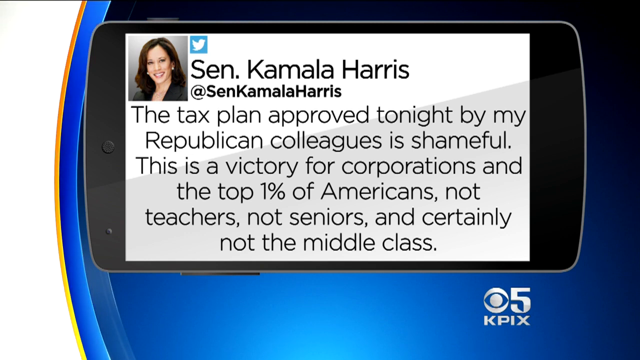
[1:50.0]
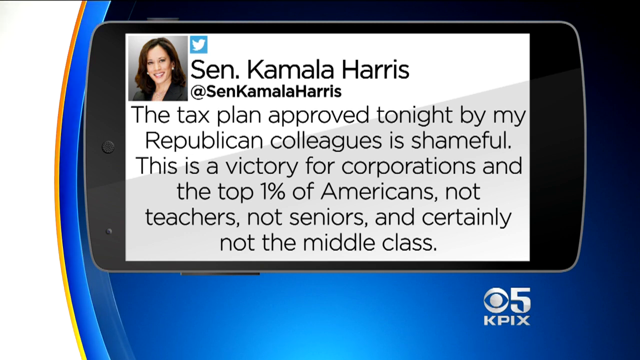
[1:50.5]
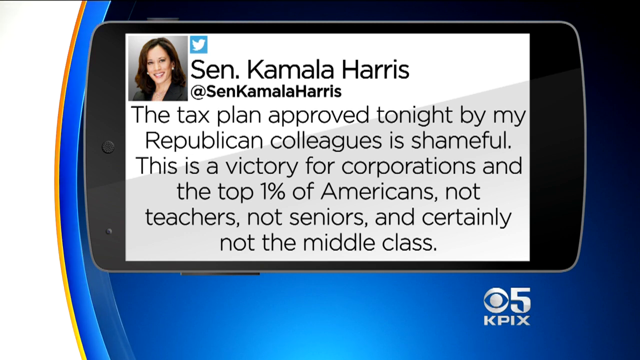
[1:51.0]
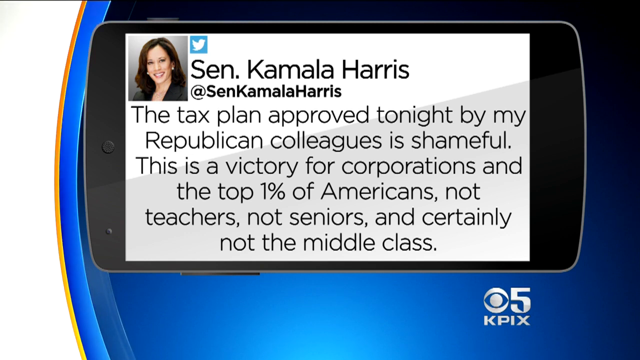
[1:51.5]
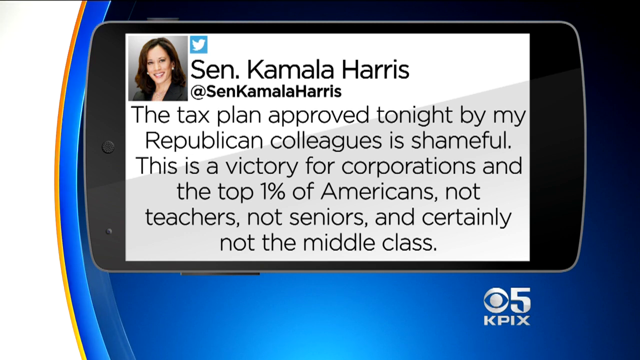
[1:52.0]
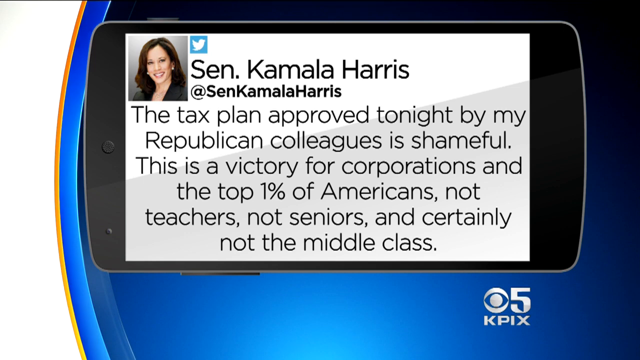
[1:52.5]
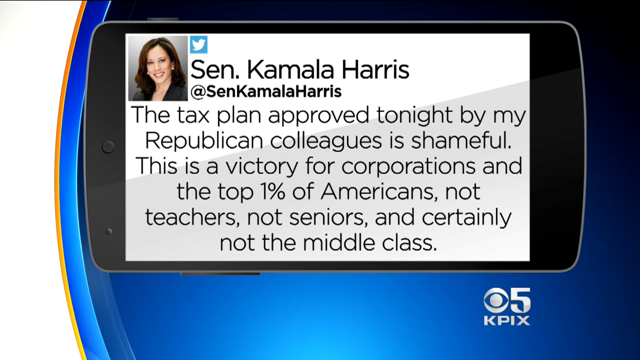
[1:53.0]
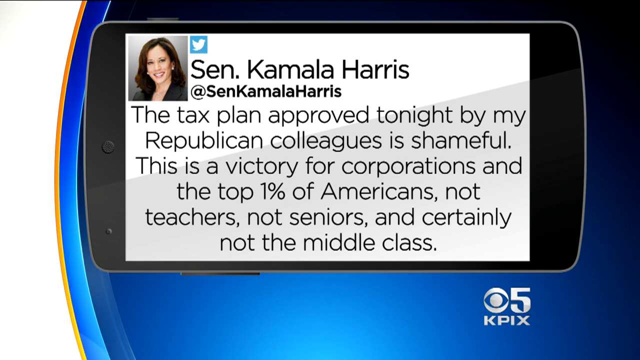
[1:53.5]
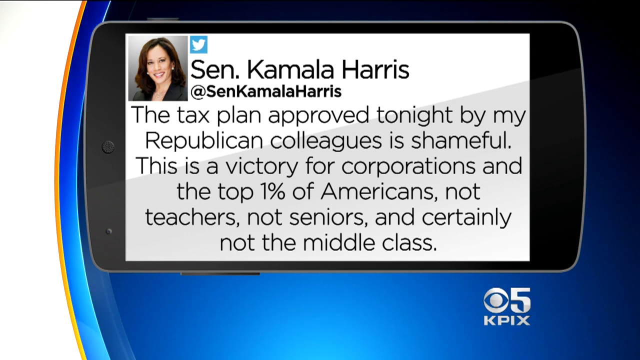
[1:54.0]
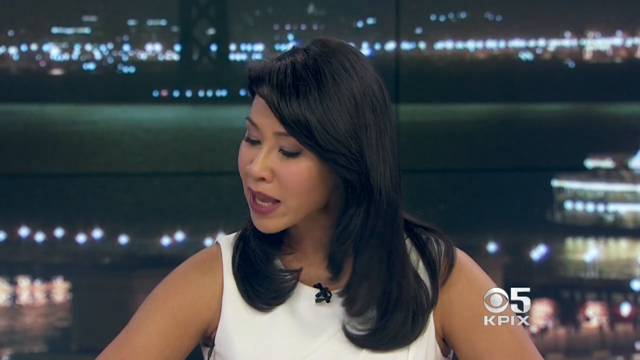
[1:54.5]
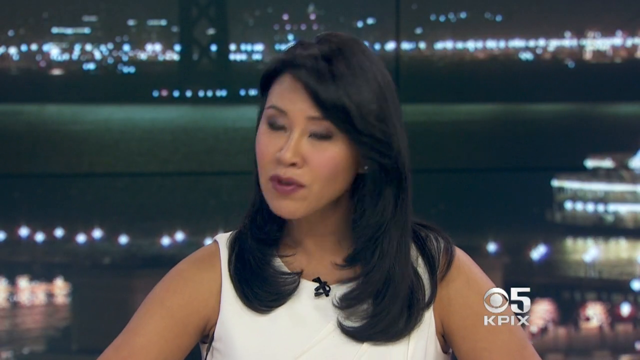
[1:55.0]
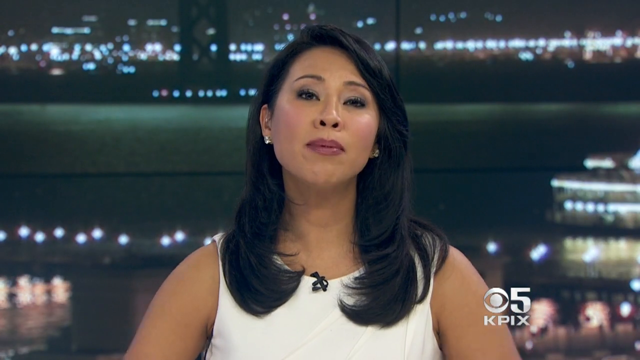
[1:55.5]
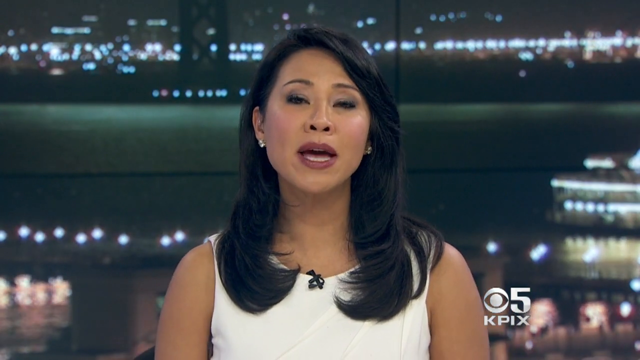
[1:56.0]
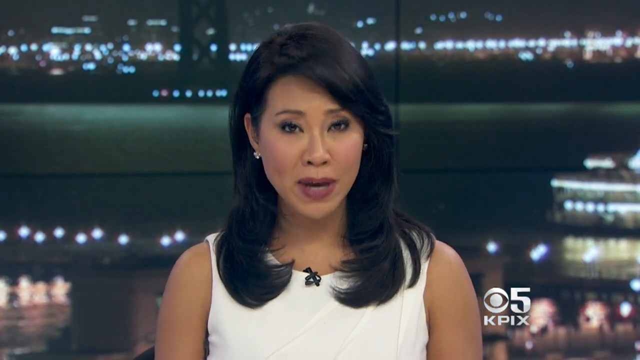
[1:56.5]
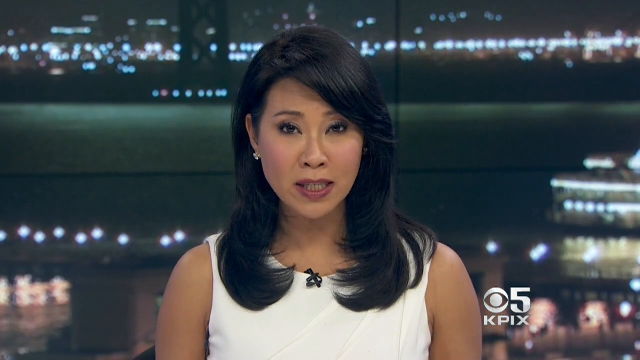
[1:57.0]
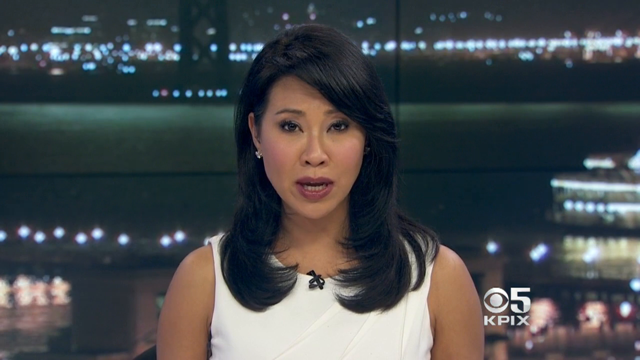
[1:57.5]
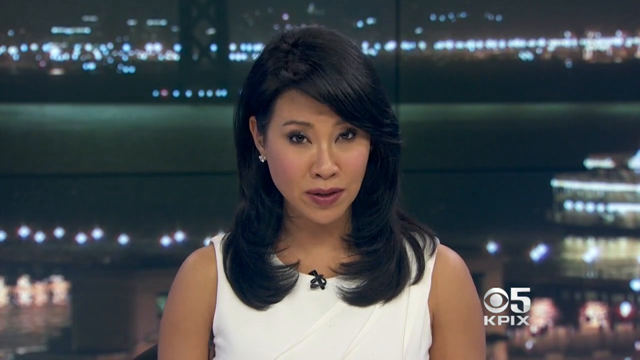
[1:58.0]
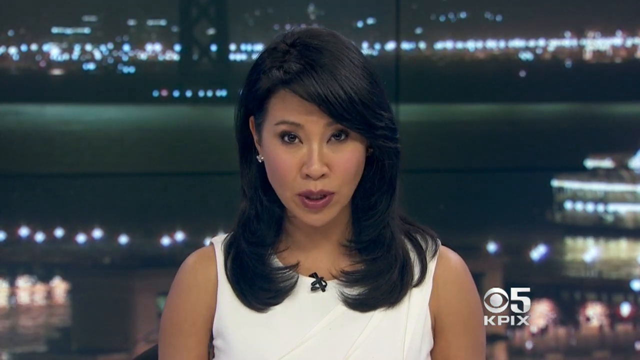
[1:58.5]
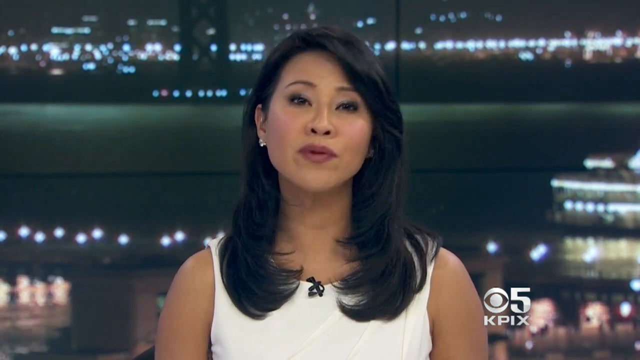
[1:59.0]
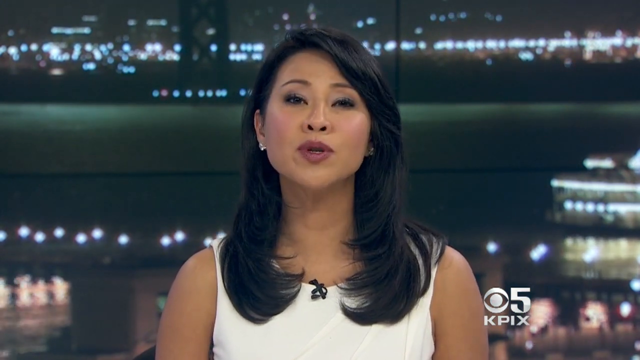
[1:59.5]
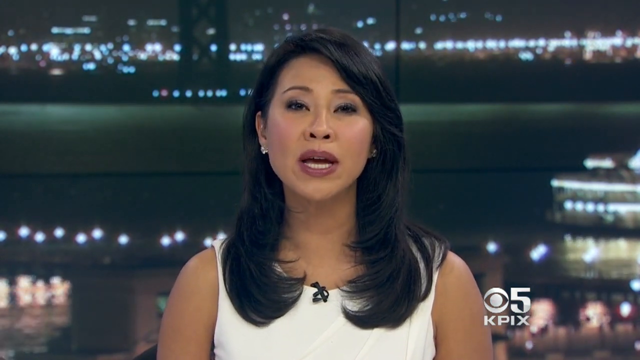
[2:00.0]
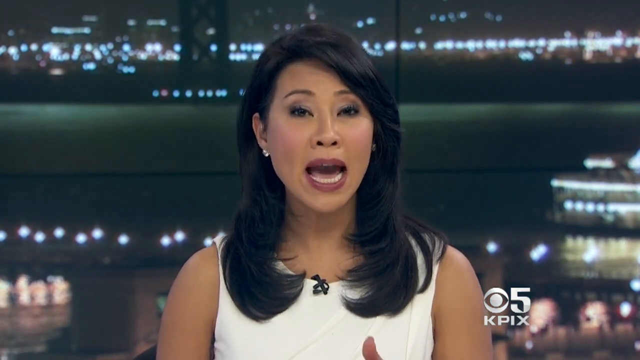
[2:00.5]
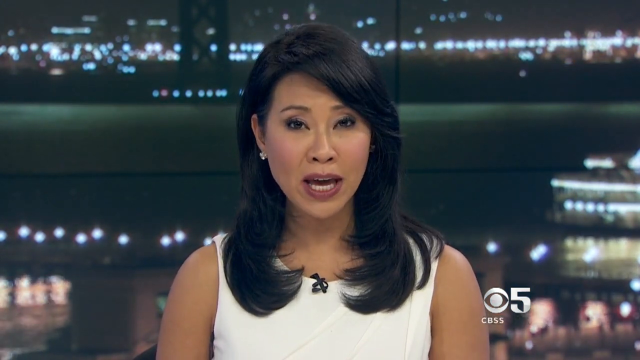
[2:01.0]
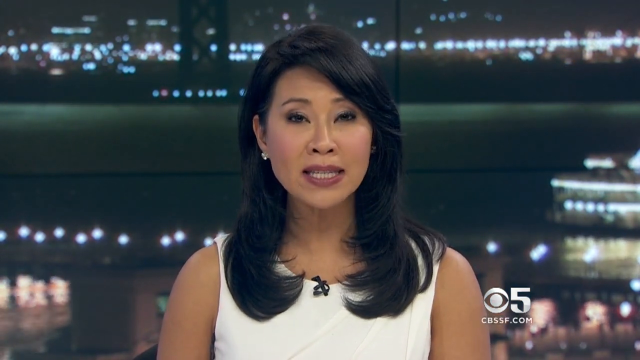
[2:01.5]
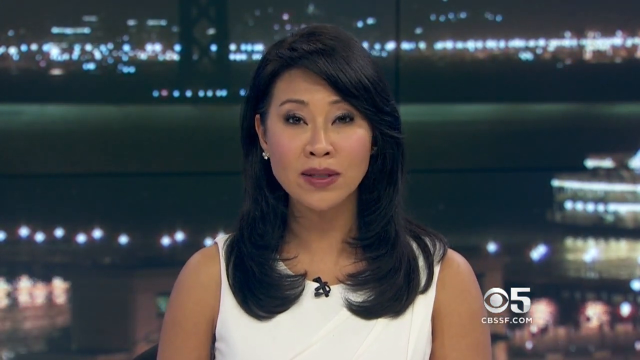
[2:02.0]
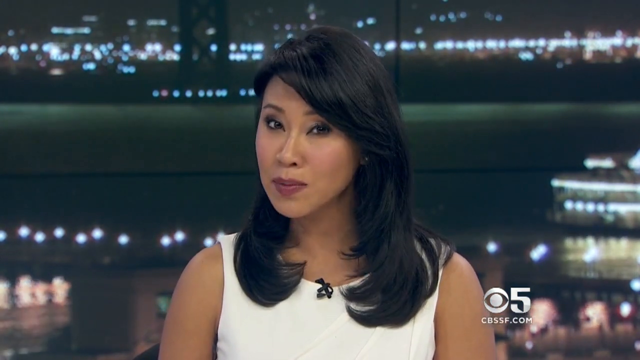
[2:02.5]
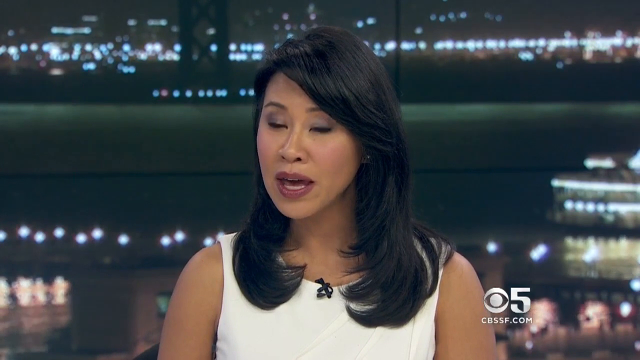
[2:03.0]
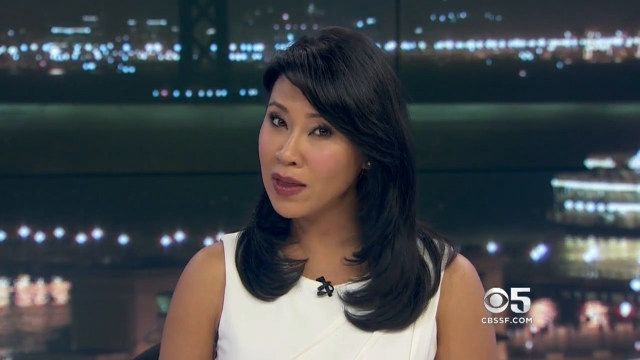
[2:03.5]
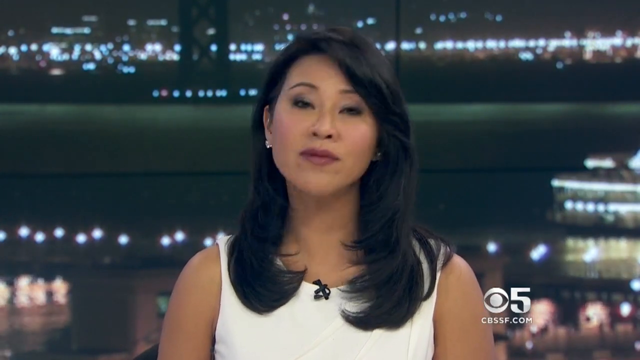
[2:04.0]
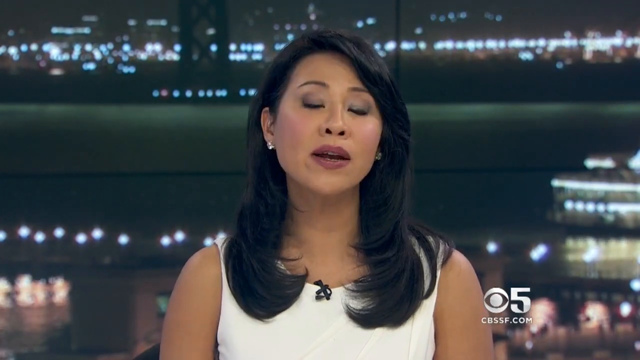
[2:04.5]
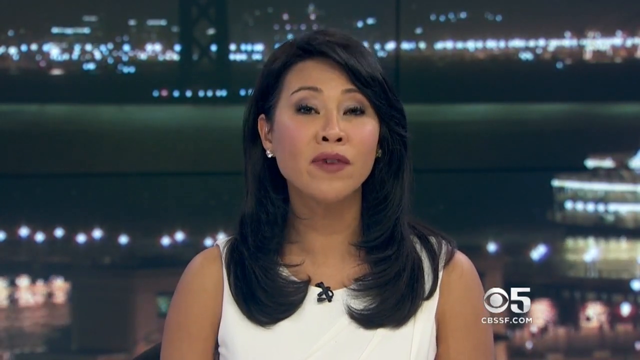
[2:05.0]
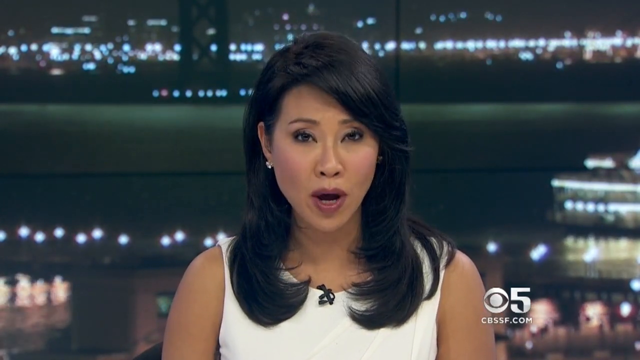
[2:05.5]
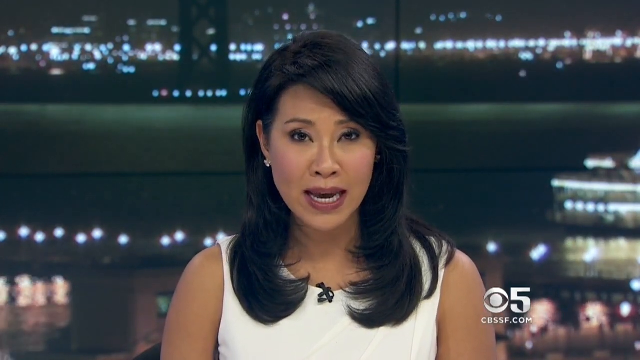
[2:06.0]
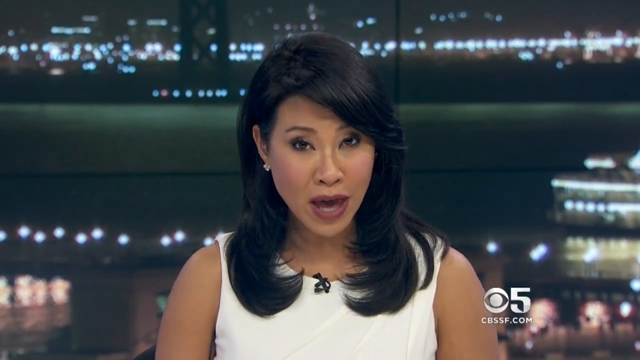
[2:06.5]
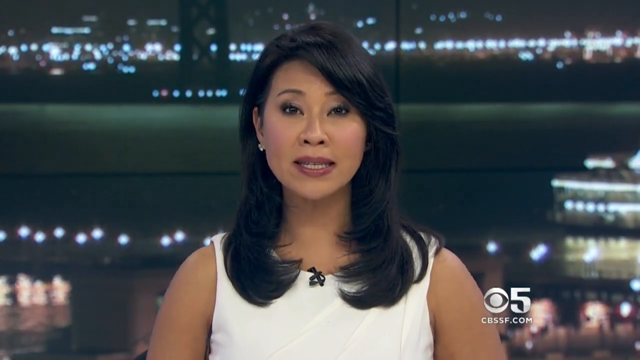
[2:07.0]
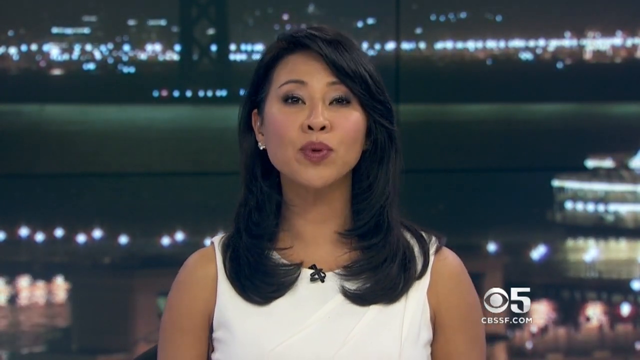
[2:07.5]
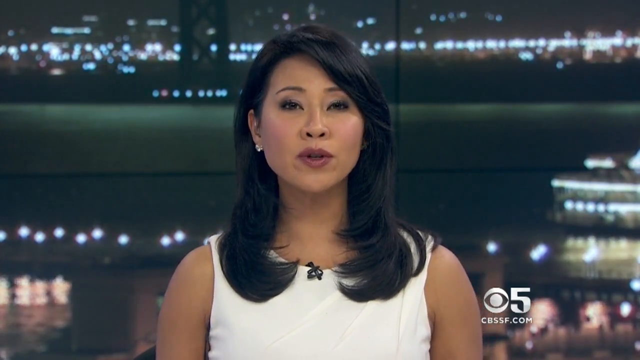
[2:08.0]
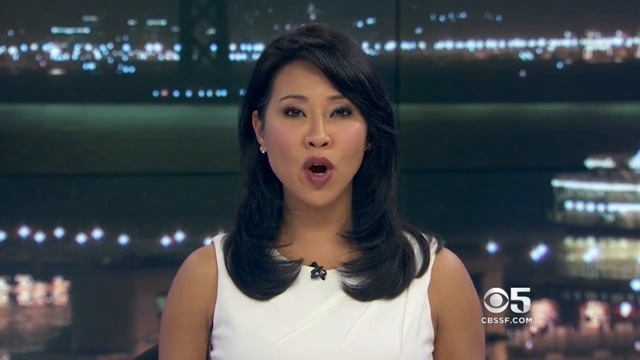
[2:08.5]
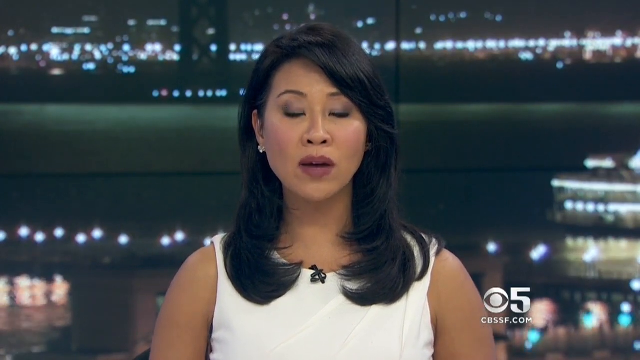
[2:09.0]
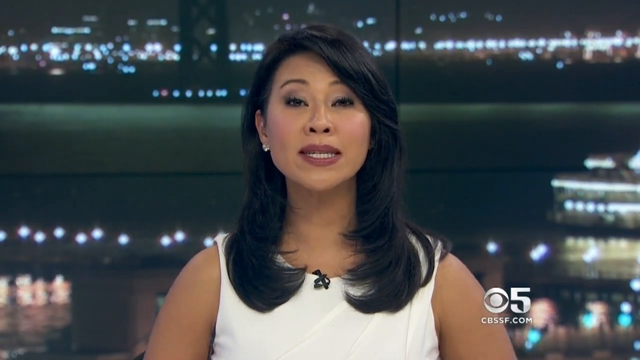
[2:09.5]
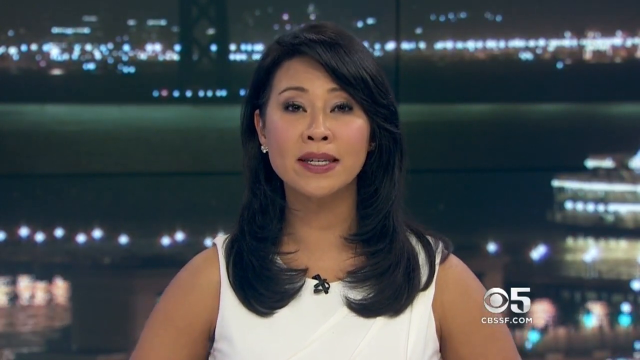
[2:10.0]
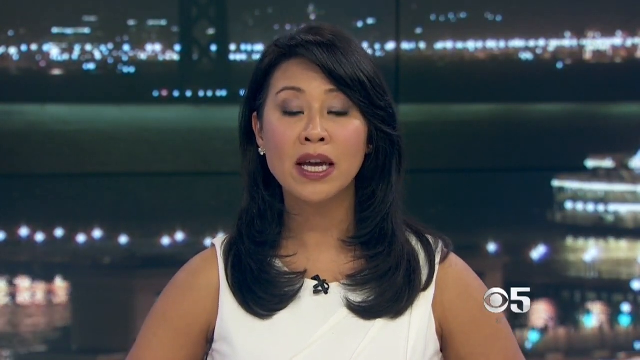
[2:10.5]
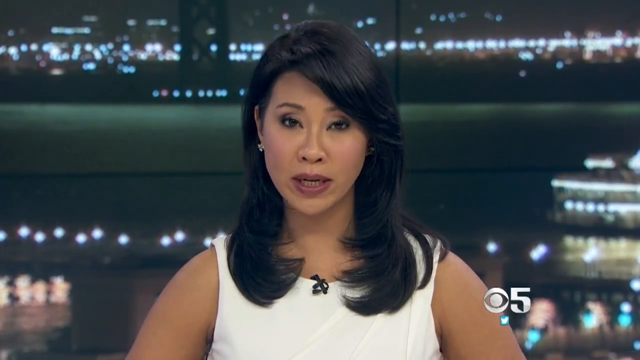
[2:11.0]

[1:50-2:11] The CBS 5 logo is shown with "KPIX" underneath. The background makes the tweets look as if they are on a phone or iPad. A picture of Senator Kamala Harris is in the upper left corner beside her post: "The tax plan approved tonight by my Republican colleagues is shameful. This is a victory for corporations and the top 1% of Americans, not teachers, not senators, and certainly not the middle class." The video then returns to the correspondent De La Cruz, whose first name is possibly Victoria. She is talking, and every now and then she tilts her chin toward the left, so her head slants with the top going to the right.